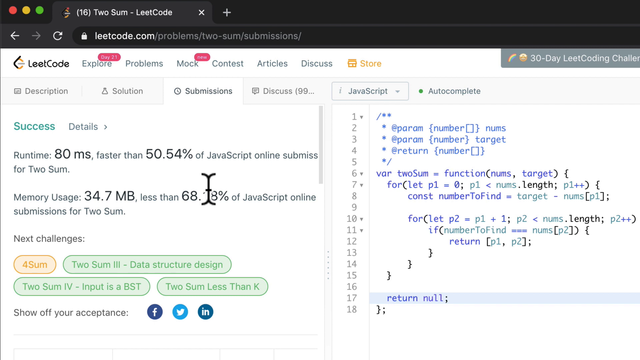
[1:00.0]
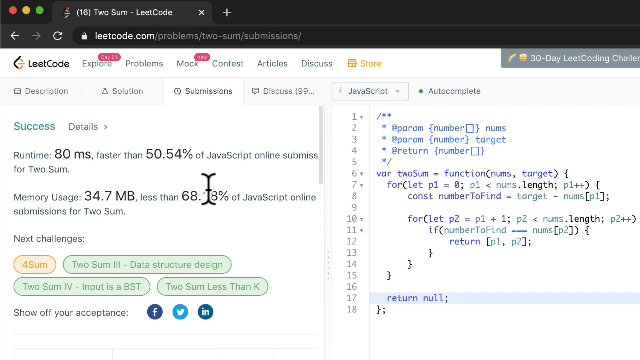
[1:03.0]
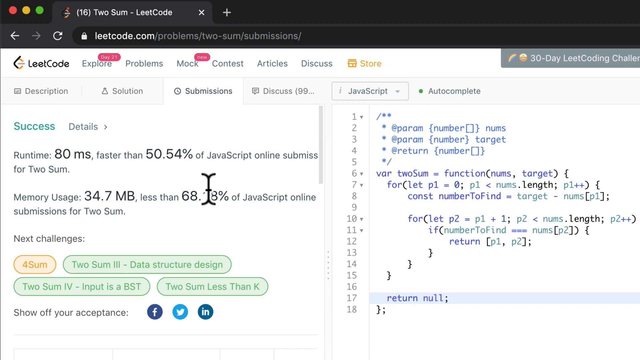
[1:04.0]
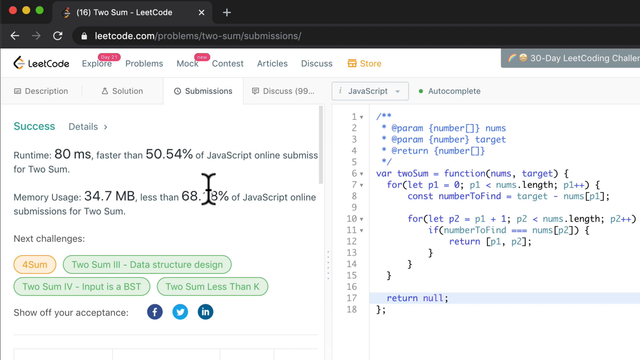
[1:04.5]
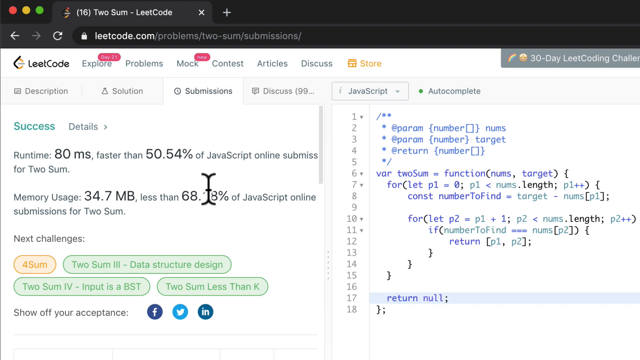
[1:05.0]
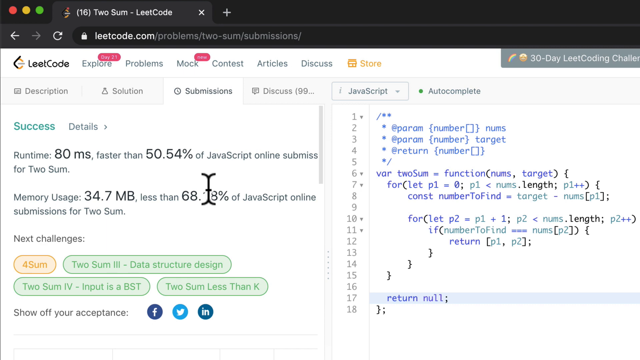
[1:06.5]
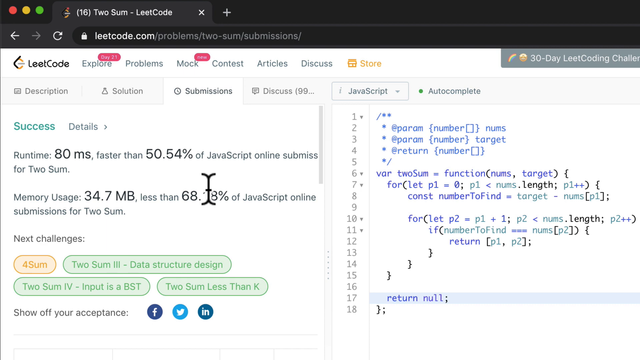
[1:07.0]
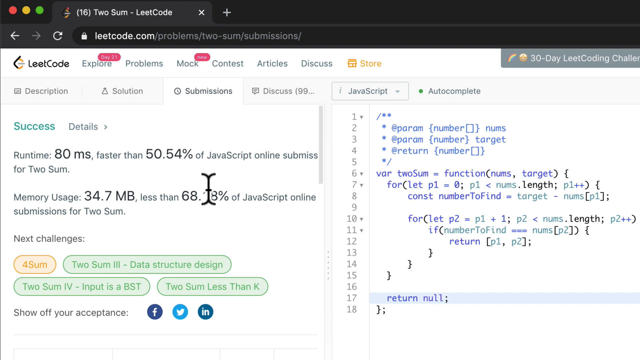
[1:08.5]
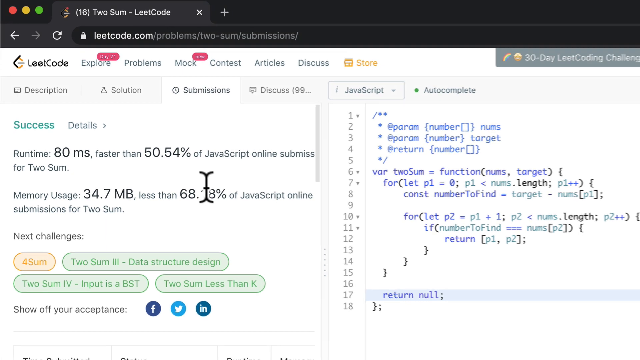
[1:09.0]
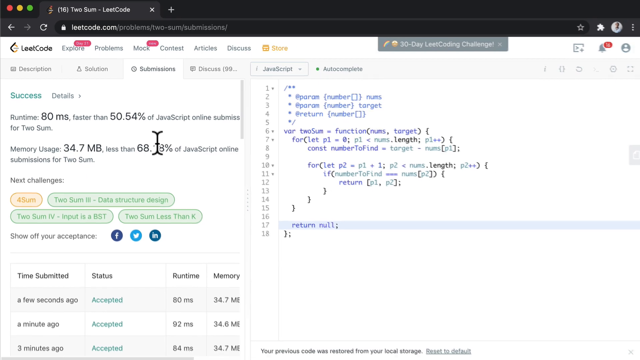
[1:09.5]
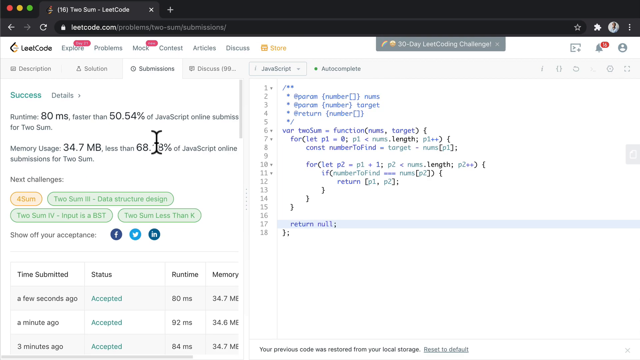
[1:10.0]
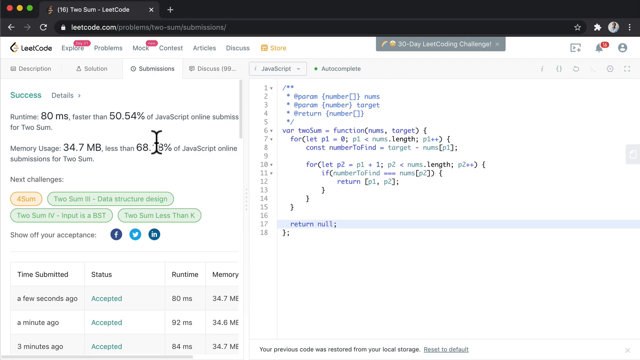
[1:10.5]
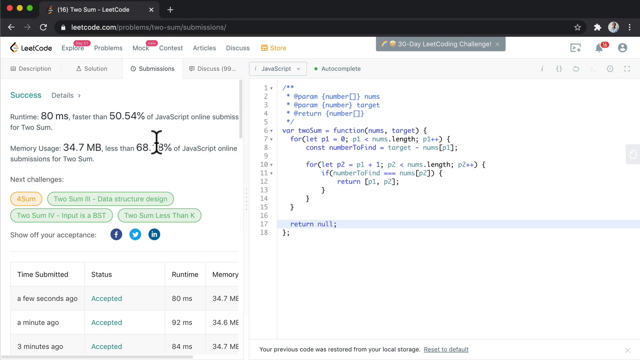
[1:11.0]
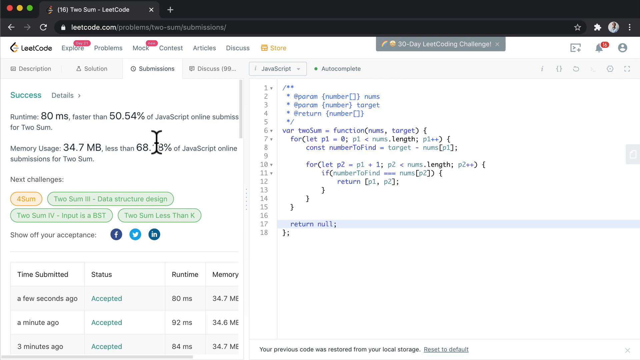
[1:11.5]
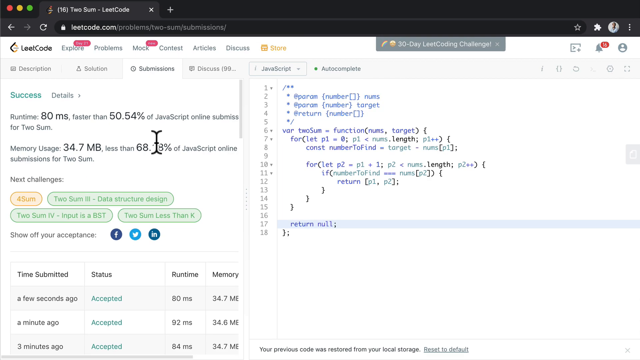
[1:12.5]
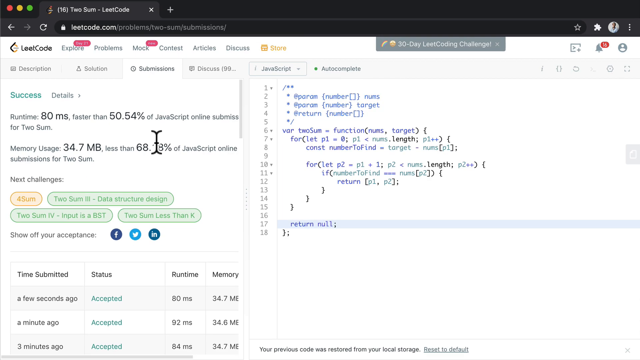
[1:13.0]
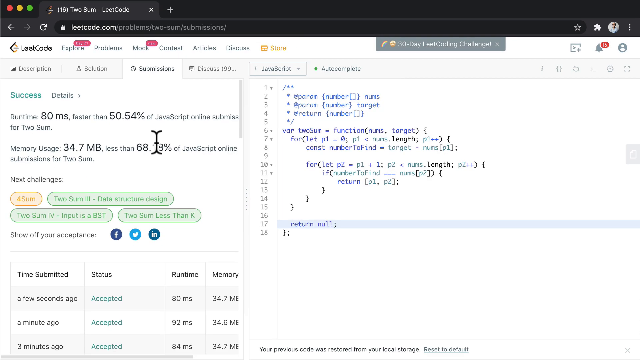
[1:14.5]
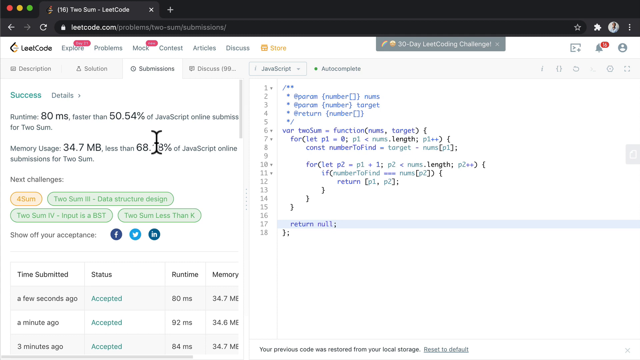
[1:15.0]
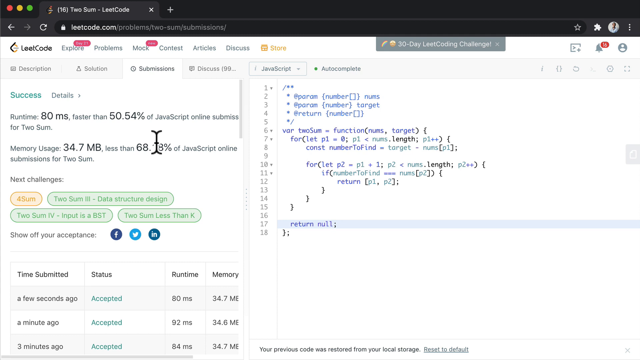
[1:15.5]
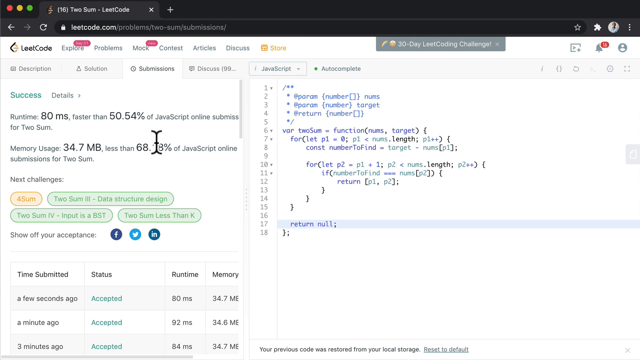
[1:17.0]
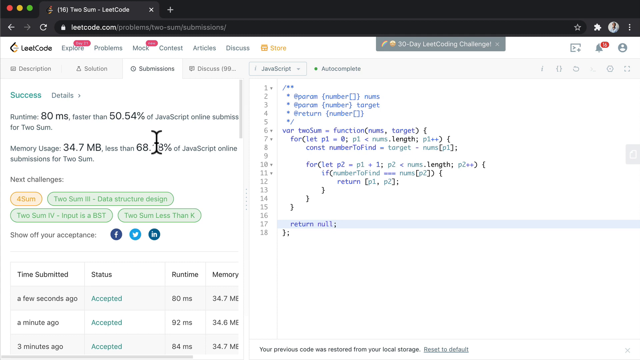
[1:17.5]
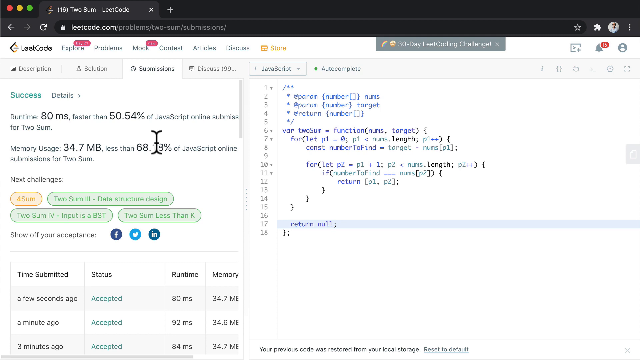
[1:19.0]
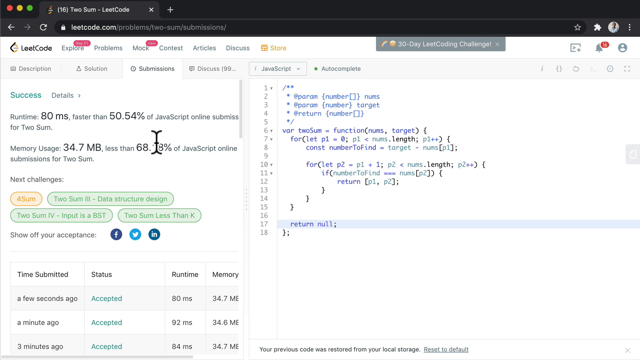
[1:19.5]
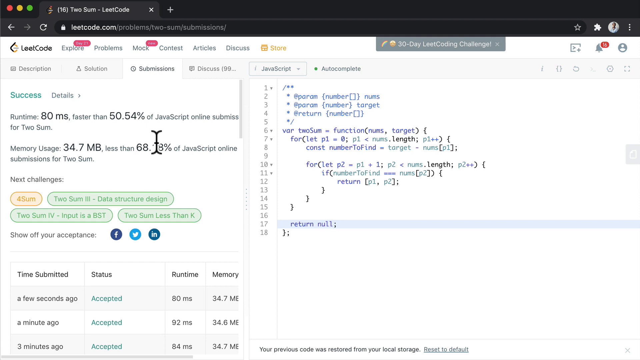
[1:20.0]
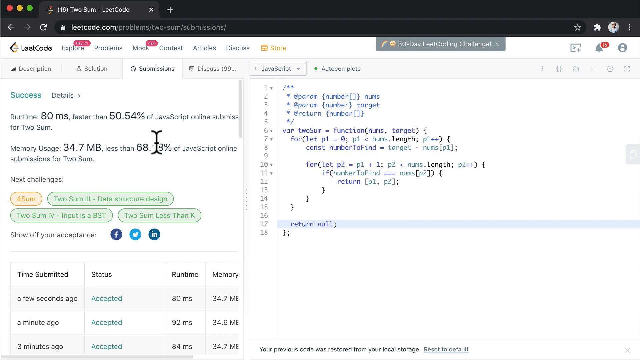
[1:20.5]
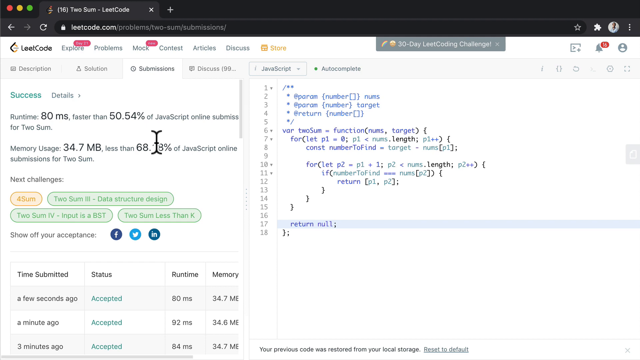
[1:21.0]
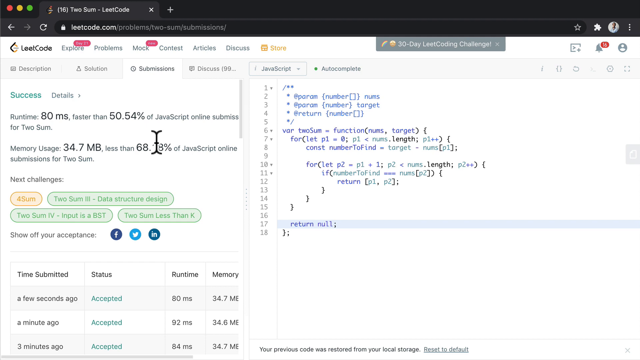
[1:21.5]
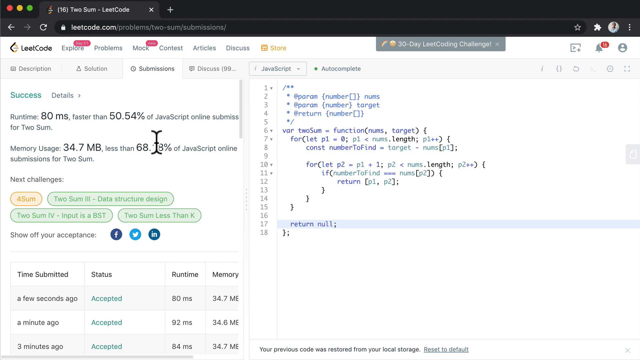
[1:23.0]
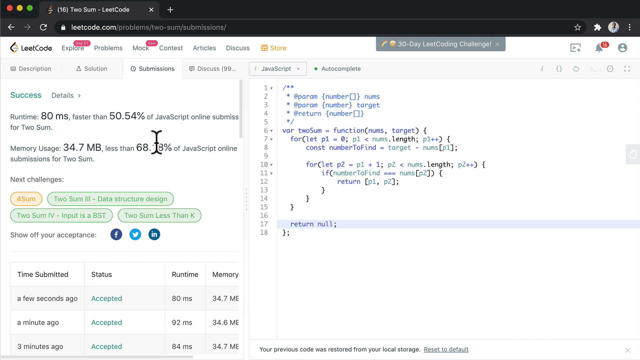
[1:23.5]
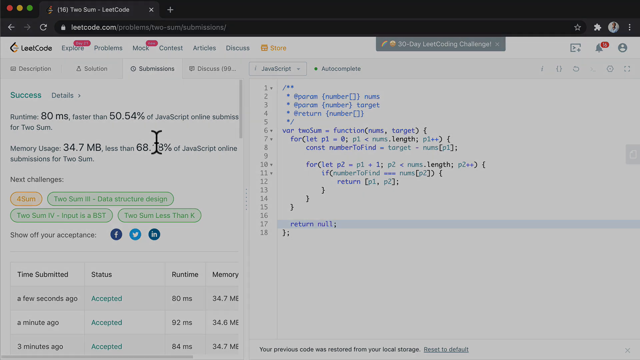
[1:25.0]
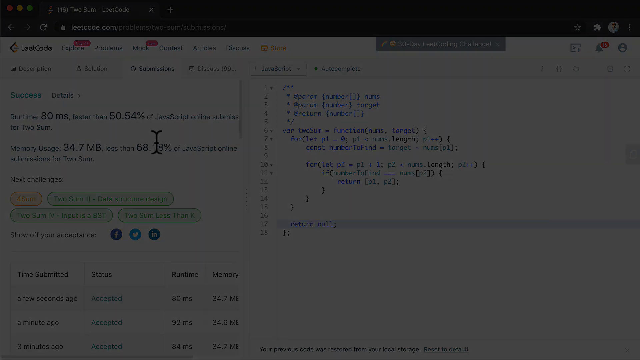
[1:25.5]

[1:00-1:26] The view starts in the same zoomed-in position on the success stats for the code, showing the faster runtime and lower memory usage, and then zooms out of the stats. The page says the next challenge is "4SUM", and there is something about data structure design, an input that is BST, and "2SUM less than K".